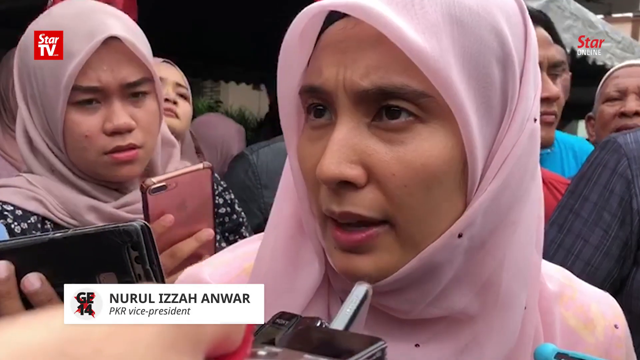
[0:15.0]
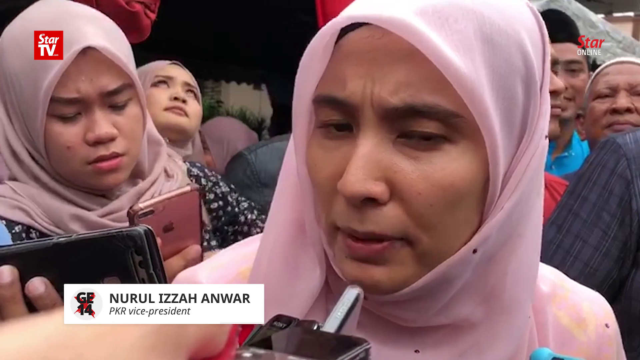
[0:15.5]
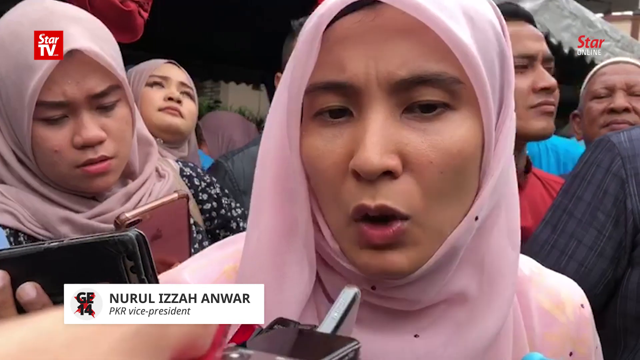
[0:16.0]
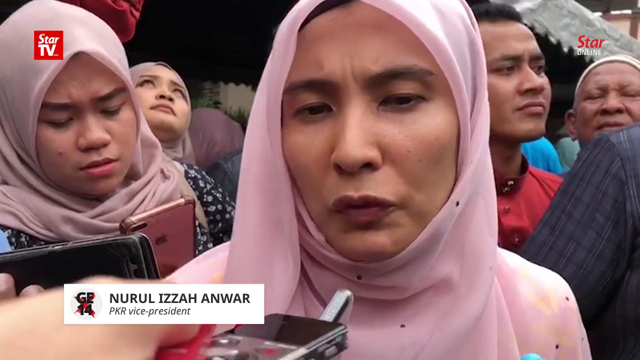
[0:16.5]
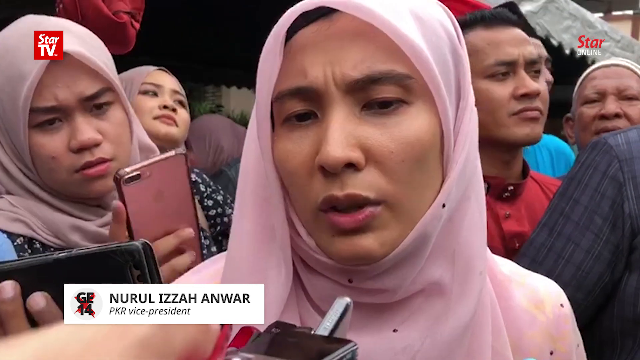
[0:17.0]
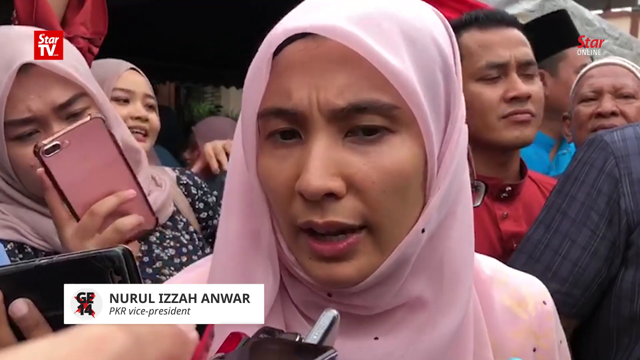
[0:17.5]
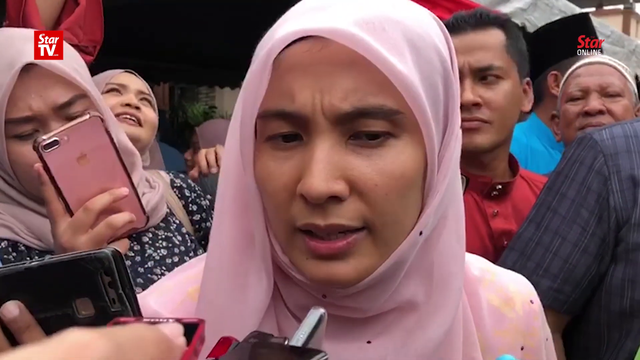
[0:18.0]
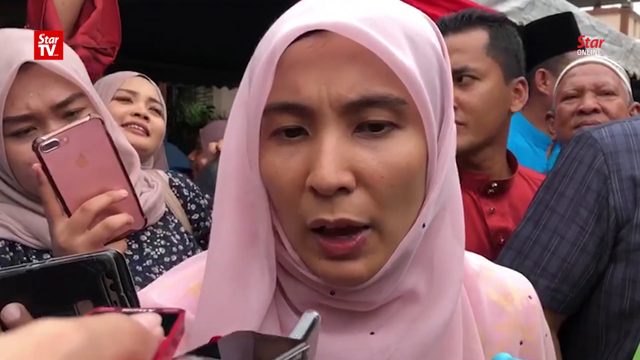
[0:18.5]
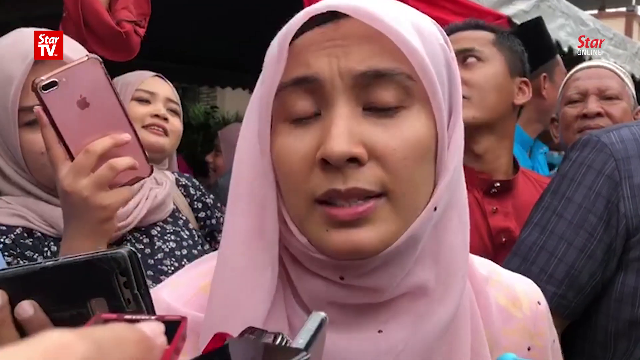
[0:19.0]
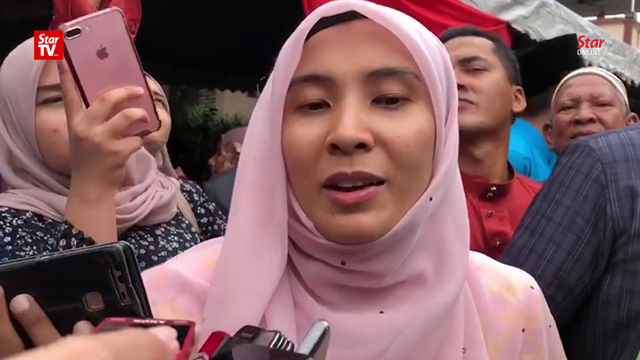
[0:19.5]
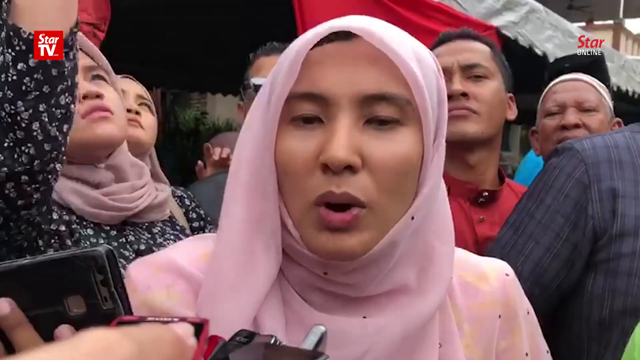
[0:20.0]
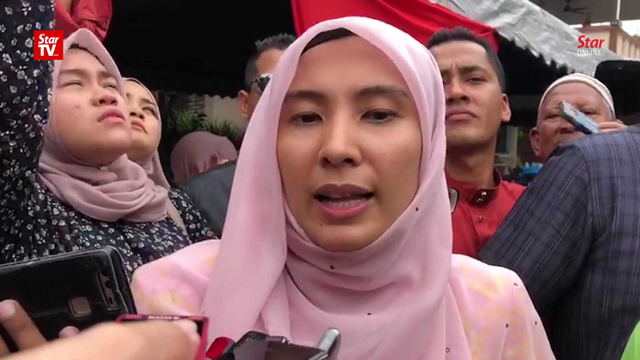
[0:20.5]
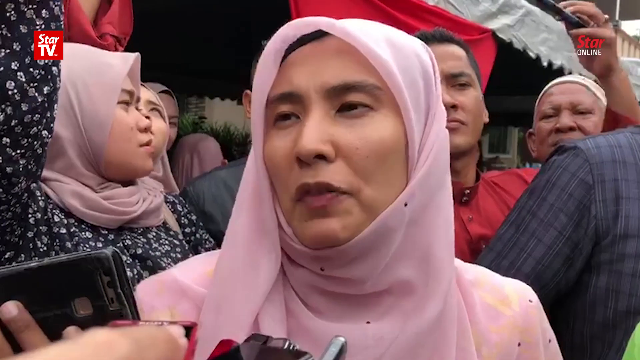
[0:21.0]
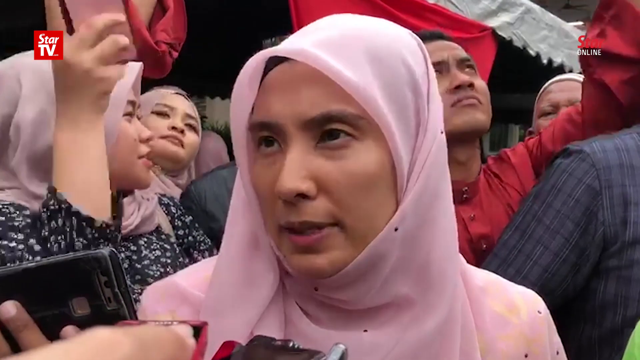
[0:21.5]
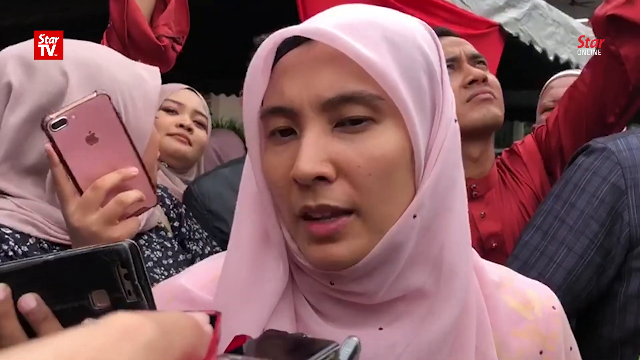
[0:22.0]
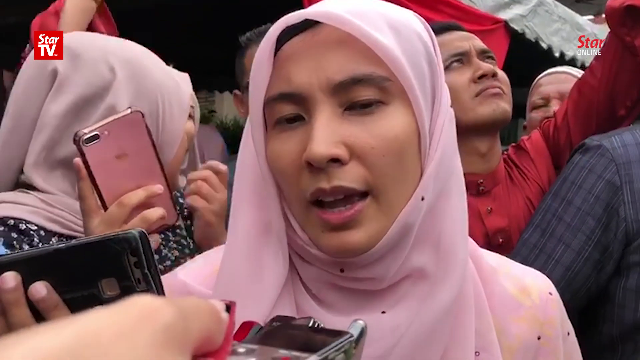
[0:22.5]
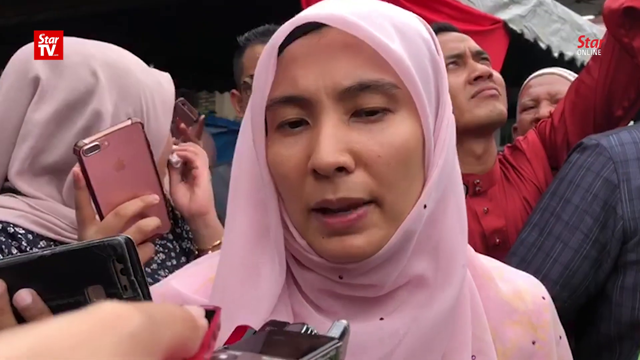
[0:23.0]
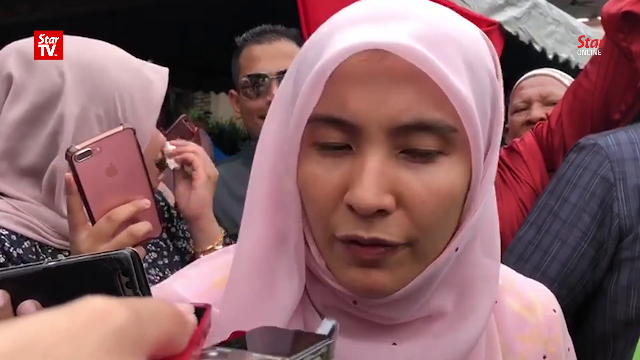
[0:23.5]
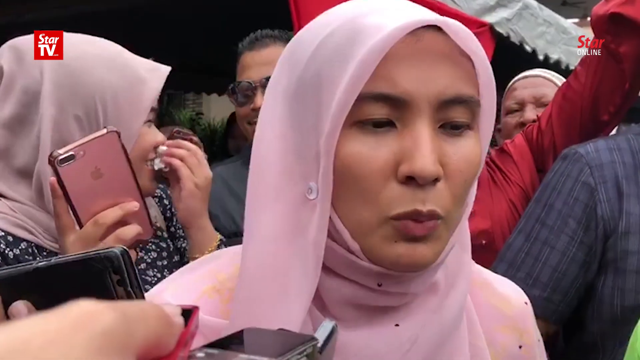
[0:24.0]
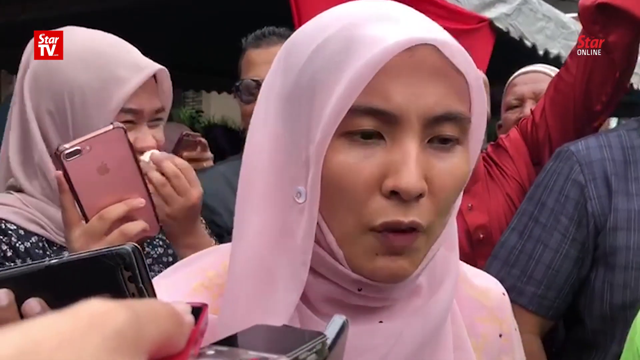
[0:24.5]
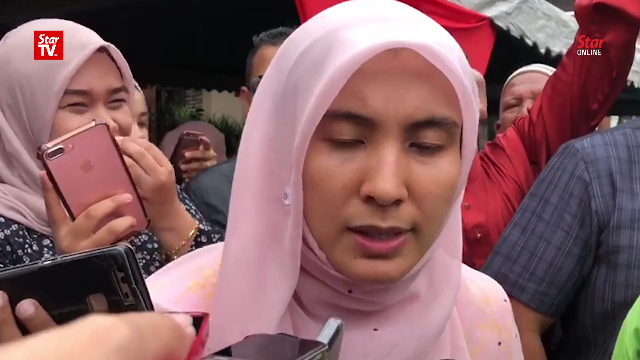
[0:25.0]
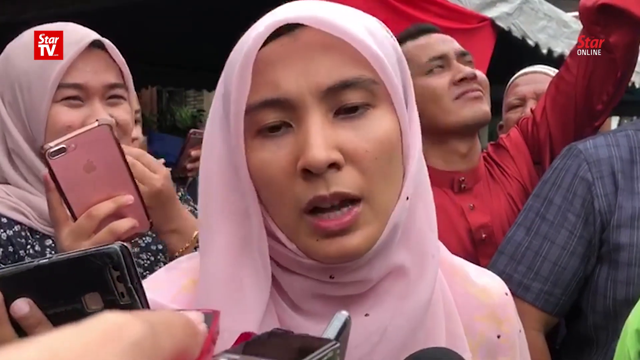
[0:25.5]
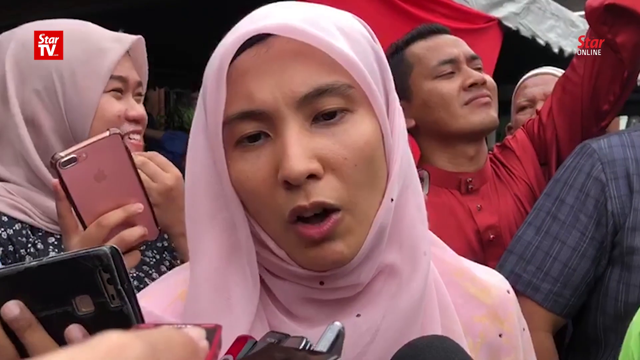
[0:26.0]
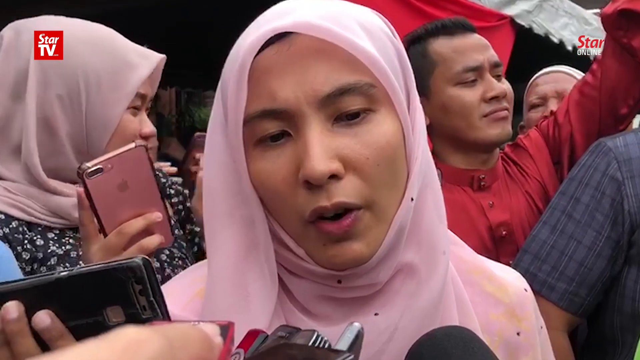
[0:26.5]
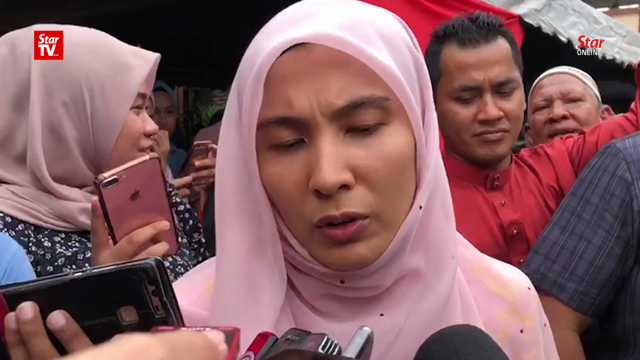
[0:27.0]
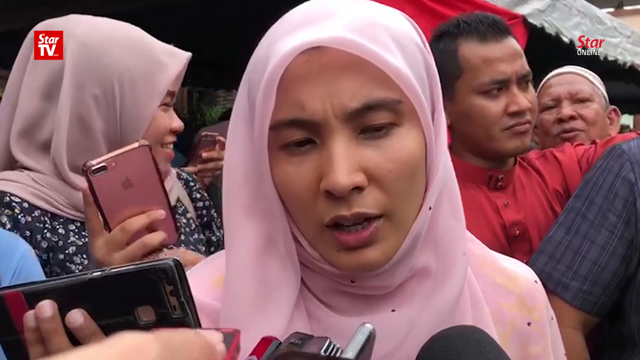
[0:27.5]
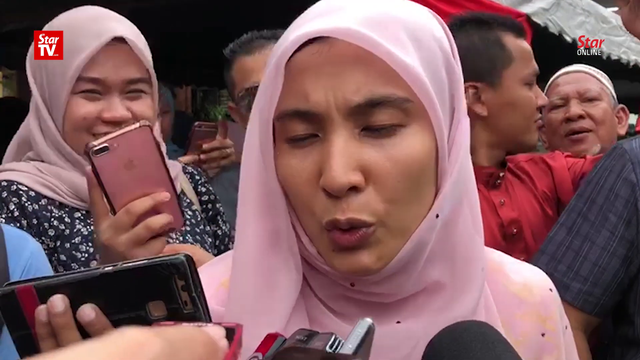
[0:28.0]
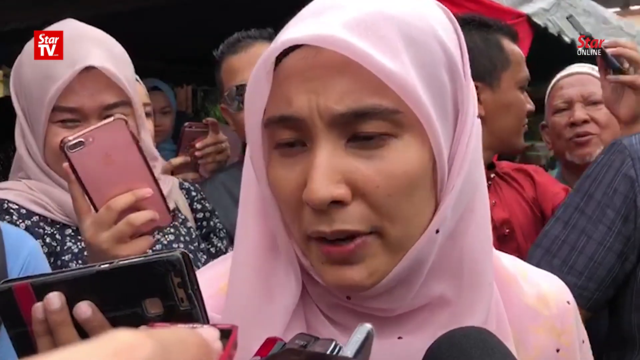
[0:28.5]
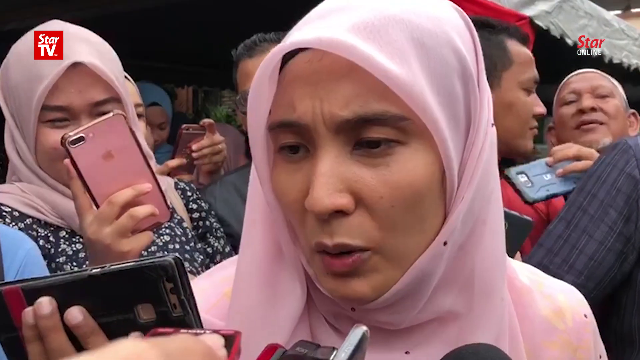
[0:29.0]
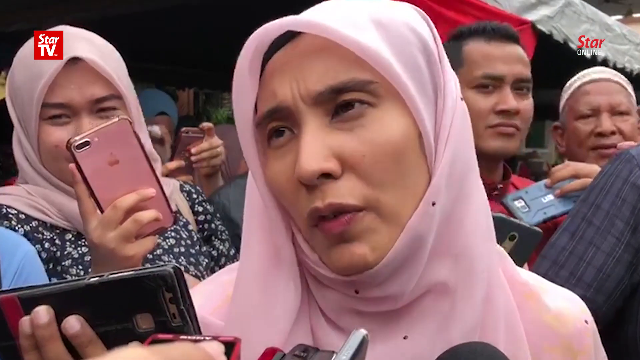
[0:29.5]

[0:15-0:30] The video, from the outlet Star TV, is titled Quit Griping About Cabinet Posts. It opens on a close-up of a woman in a light pink hijab, traditional Middle Eastern wear, speaking with reporters, with a crowd of people visible behind her. It then switches to the woman walking down a village street surrounded by many other women wearing hijabs. The footage alternates between her speaking with reporters and her doing things around the area, such as serving food onto a plate from a buffet setup and shaking hands with a group of people. It appears to show a woman running for a government position in a different country. A white rectangular box appears on screen containing "GE", then a box with an X in the center, then the number "14", apparently indicating a 2014 general election.